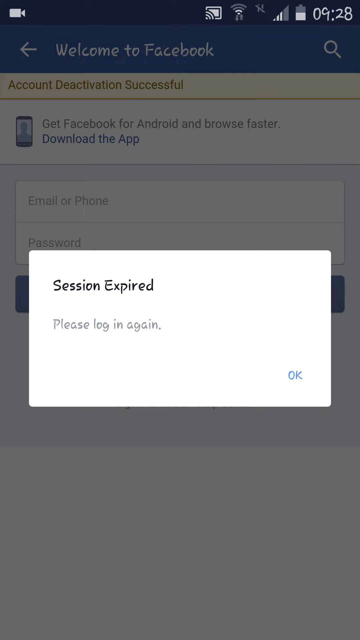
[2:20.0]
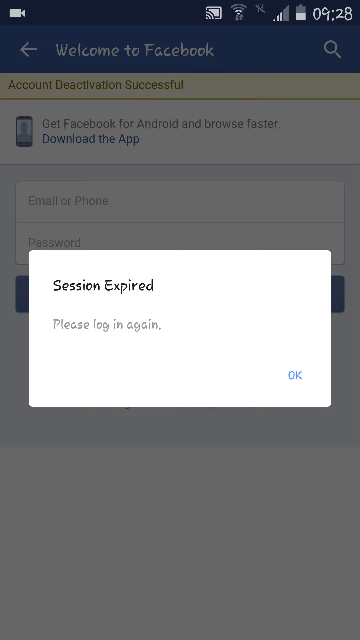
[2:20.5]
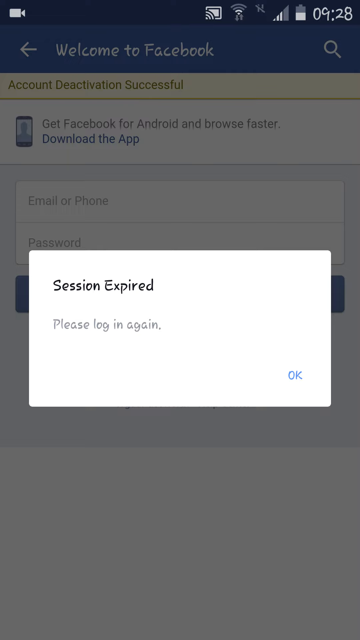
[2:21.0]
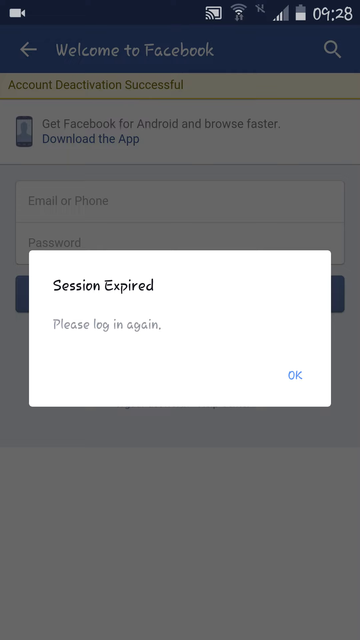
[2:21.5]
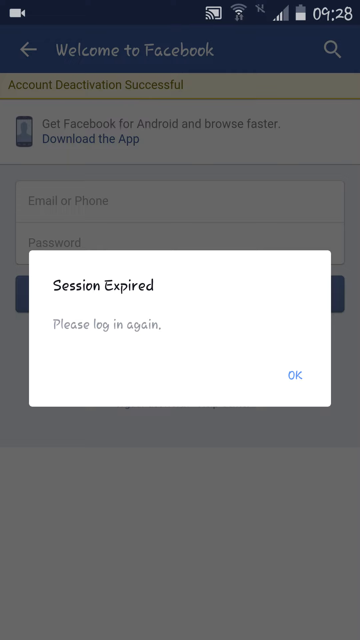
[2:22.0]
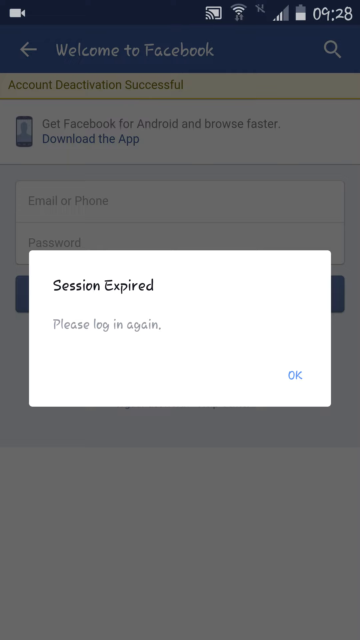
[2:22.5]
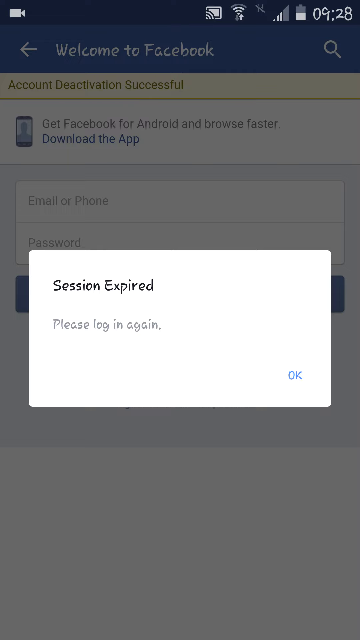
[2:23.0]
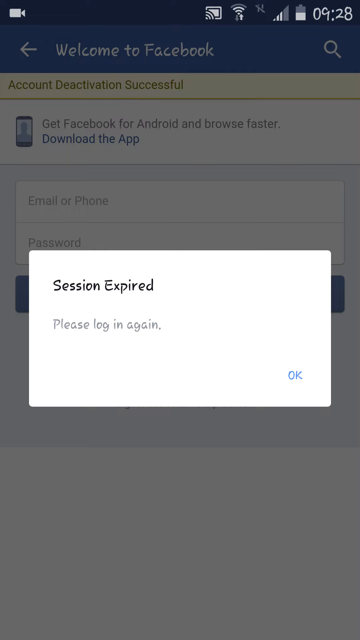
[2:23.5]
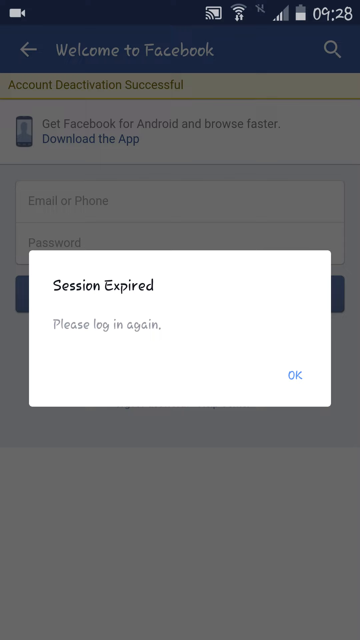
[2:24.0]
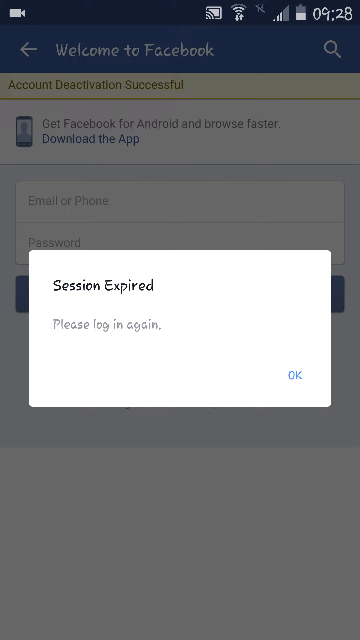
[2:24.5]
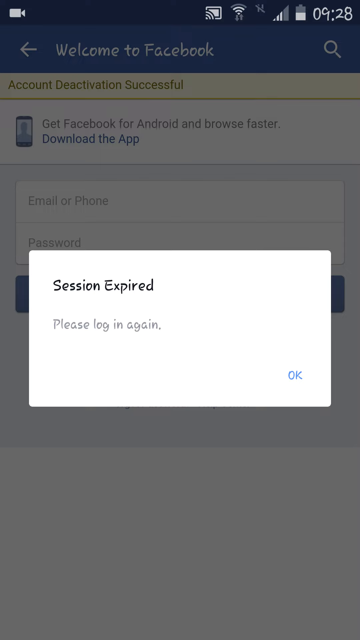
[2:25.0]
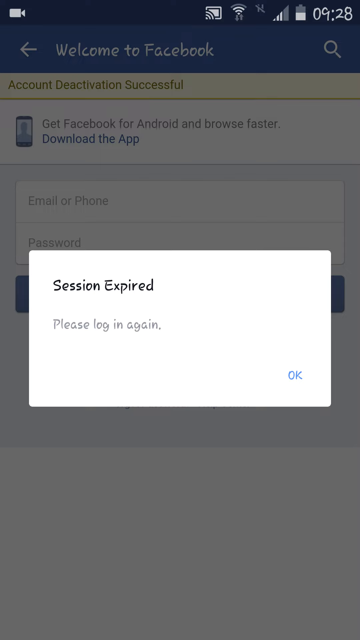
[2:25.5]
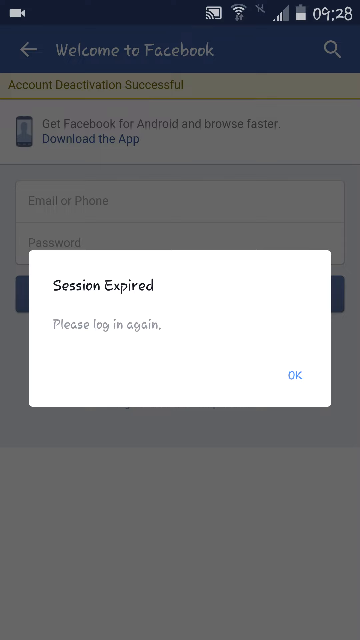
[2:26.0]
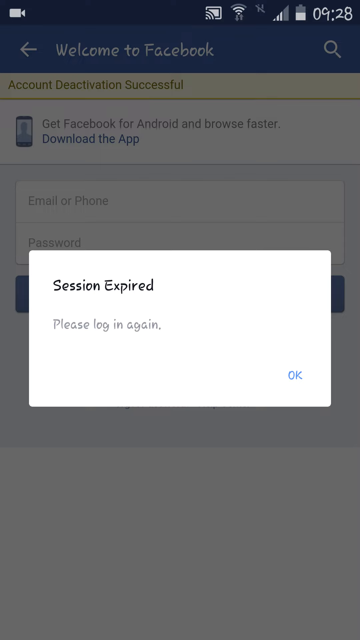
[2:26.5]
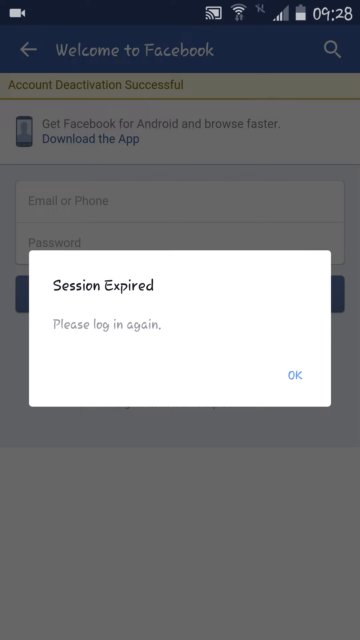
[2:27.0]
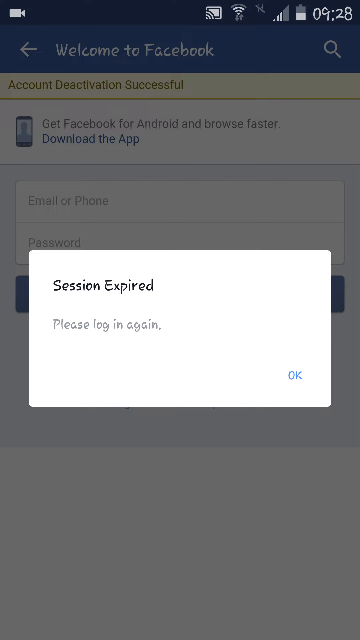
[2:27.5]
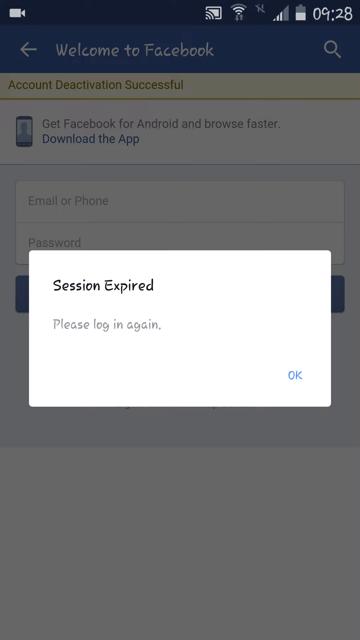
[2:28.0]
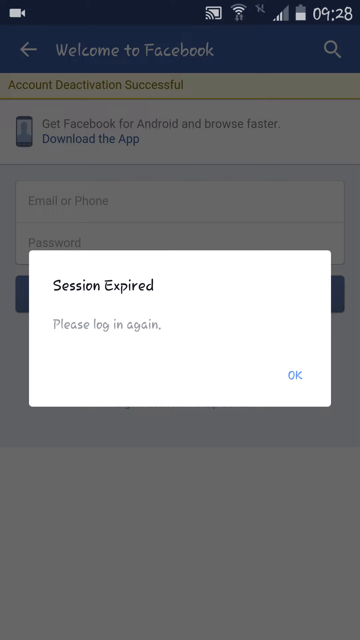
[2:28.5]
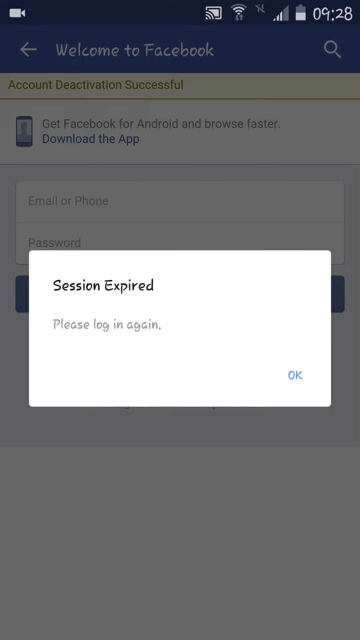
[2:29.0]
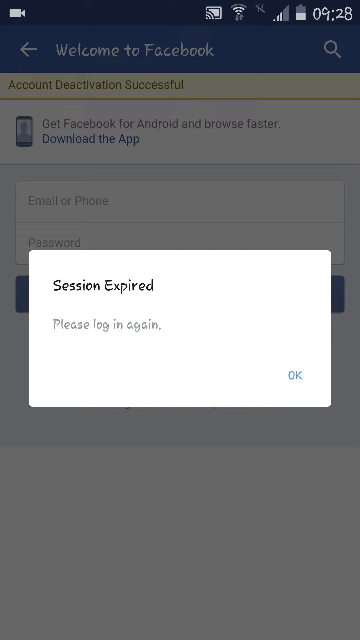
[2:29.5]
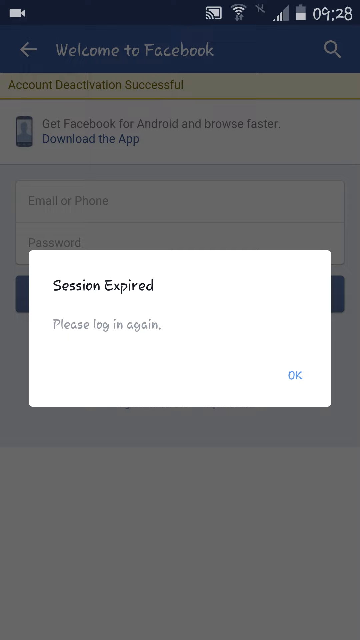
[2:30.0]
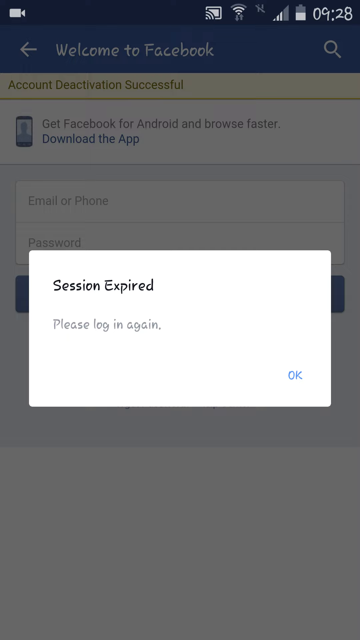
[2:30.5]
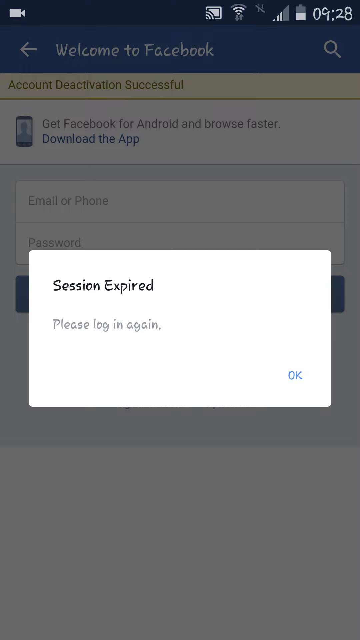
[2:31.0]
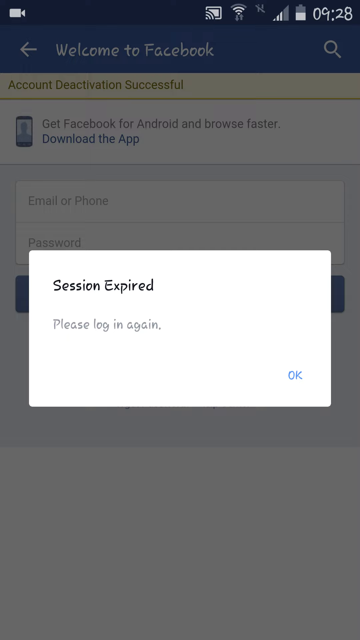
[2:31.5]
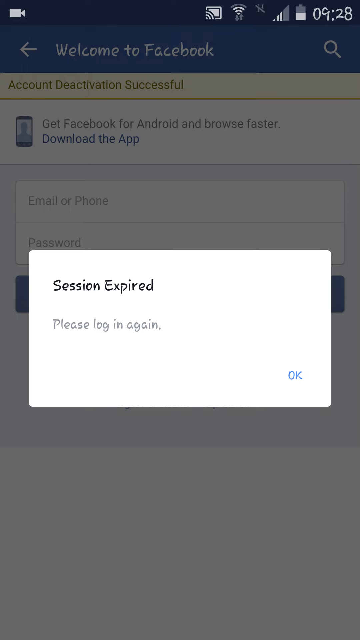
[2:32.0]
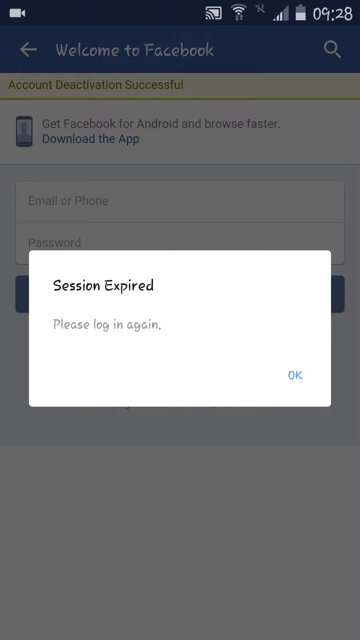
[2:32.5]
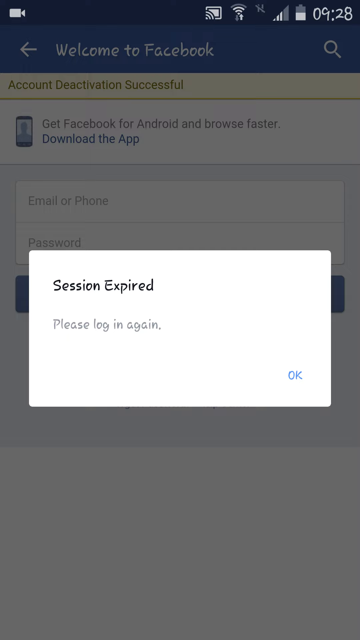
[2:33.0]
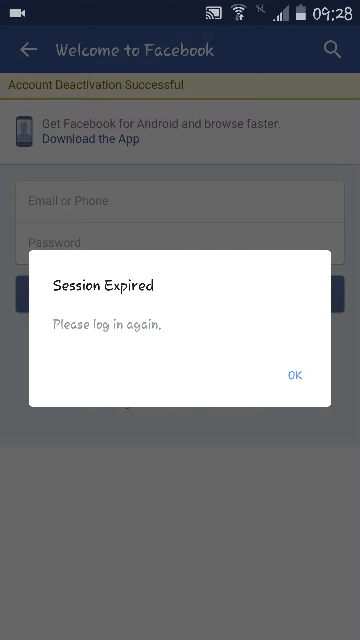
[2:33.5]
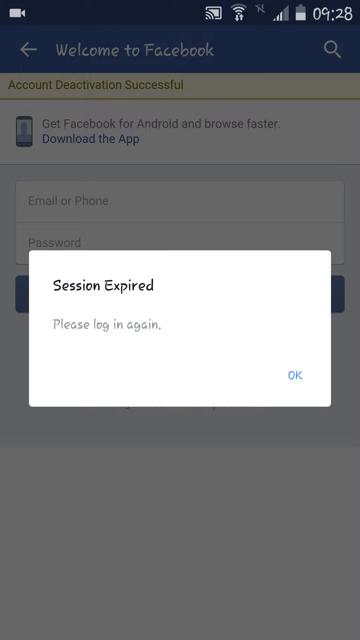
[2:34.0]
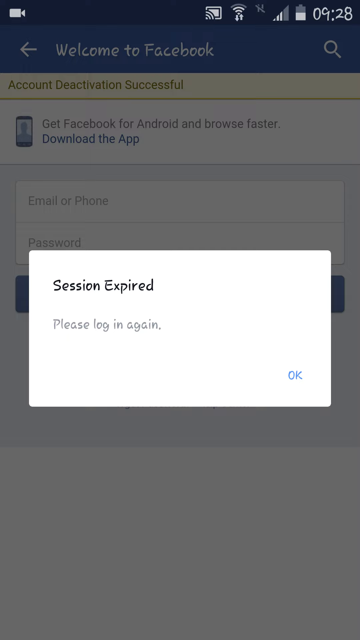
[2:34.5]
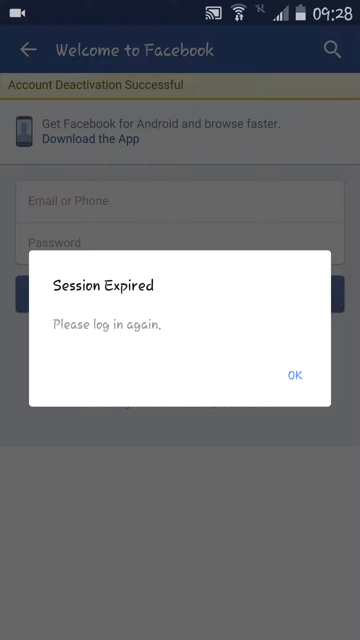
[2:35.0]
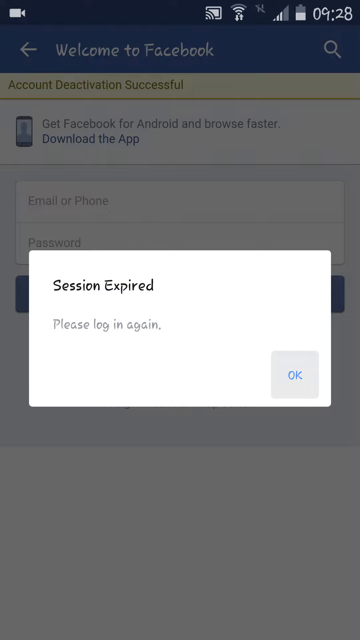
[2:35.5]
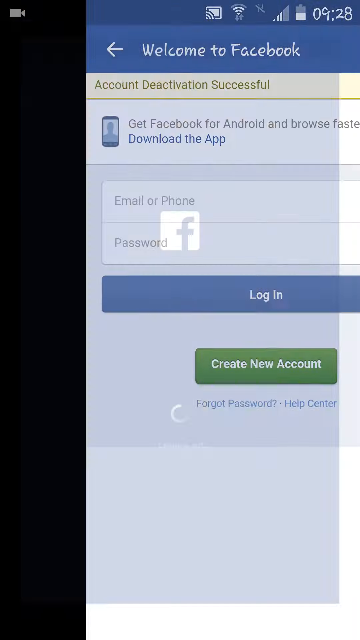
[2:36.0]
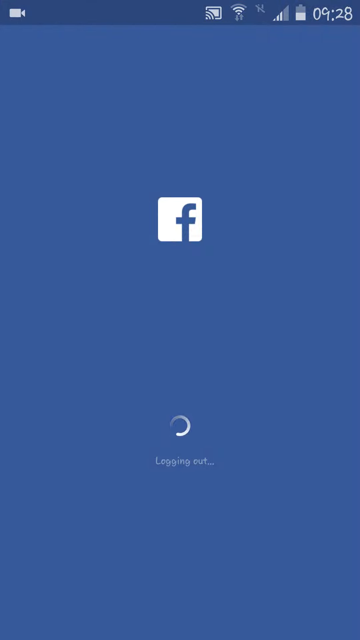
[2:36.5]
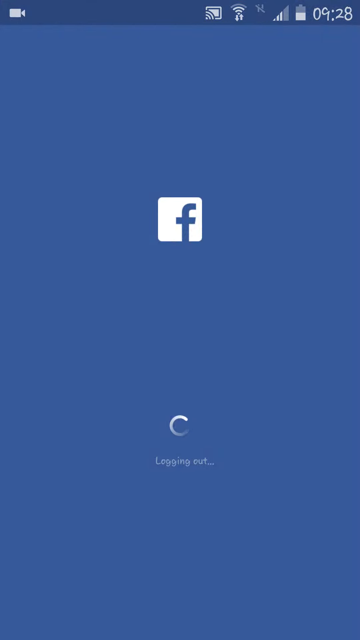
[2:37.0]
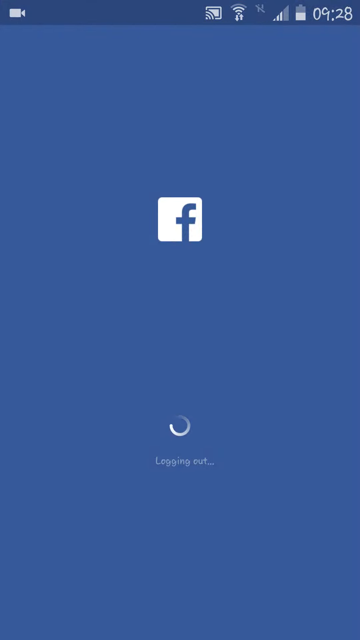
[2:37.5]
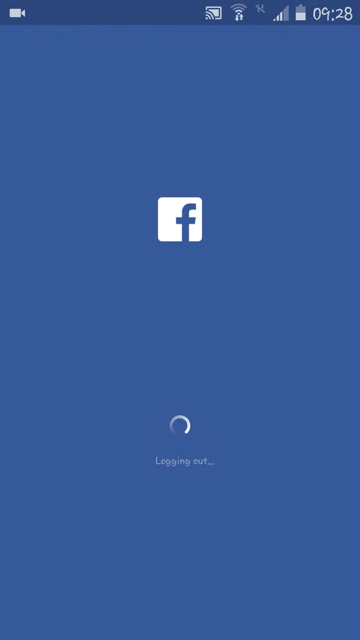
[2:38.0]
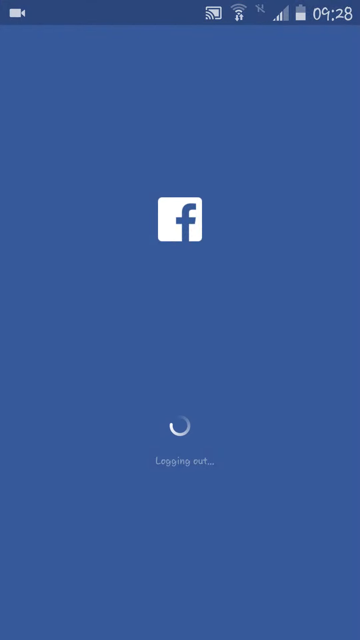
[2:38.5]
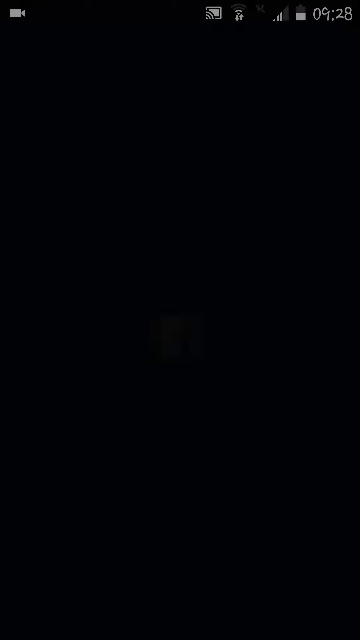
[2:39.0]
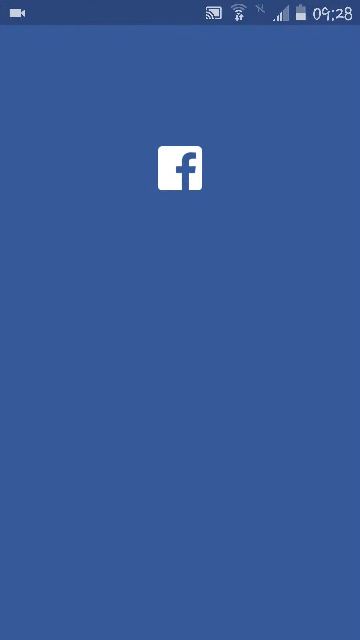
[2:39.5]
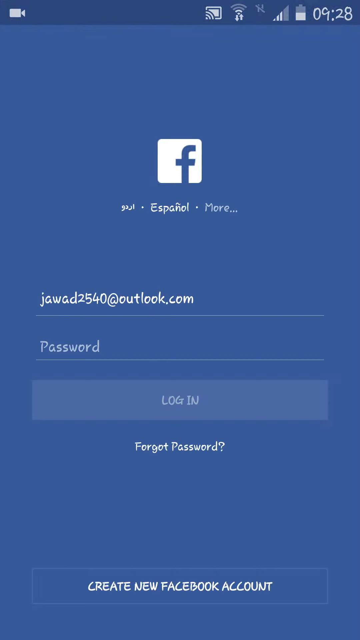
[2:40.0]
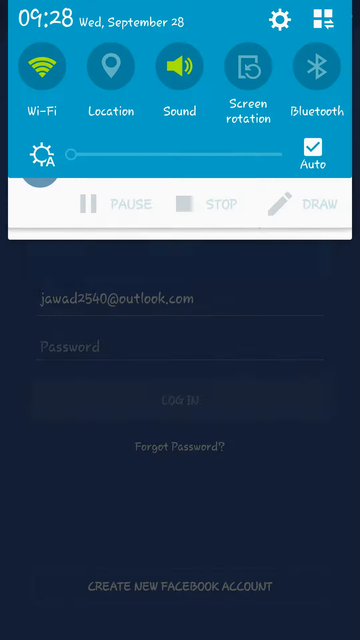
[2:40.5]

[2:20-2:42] A "welcome to Facebook" screen appears on a cell phone after someone has deactivated their Facebook account; it is the Facebook home screen for people without accounts. At the very top it says "welcome to Facebook", with a left arrow to its left and a magnifying glass to its right. Underneath it says "account deactivation successful". Below that is an icon of a cell phone with "get Facebook for Android and browse faster, download the app", then a place to enter an email or phone number and a place to enter a password. In the center of the screen is a white block that says "session expired", with "please log in again" beneath it and "okay" in its bottom right corner. Cell phone icons at the very top show the time in the upper right corner, the battery bar, the cell phone signal bar and the Wi-Fi signal bar. Then the screen changes to one that says "logging out", with a Facebook symbol in the center, the rest of the screen blue, and a little loading sign at the bottom. Next a Facebook login screen shows the username of the person who deactivated their account. Then phone controls pop up on the screen: the time, the date, Wi-Fi, location, sound, screen rotation and Bluetooth, a volume bar, recording controls below that, and beneath those A2 screen recorder with text saying "A2 screen recorder is running".